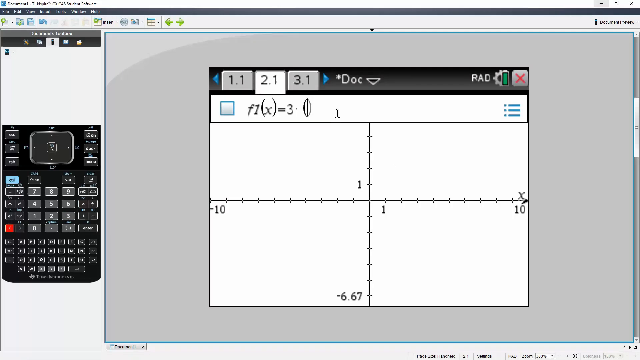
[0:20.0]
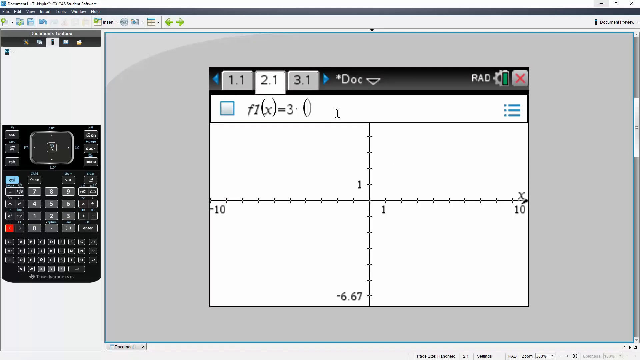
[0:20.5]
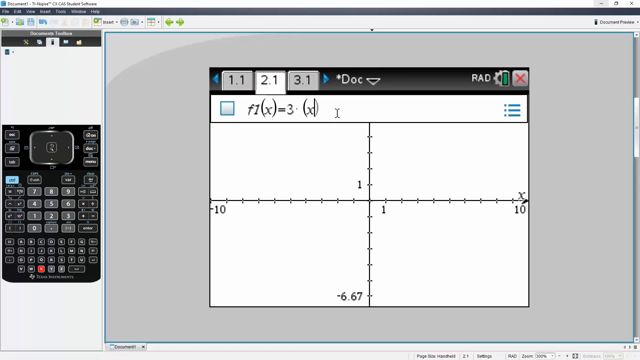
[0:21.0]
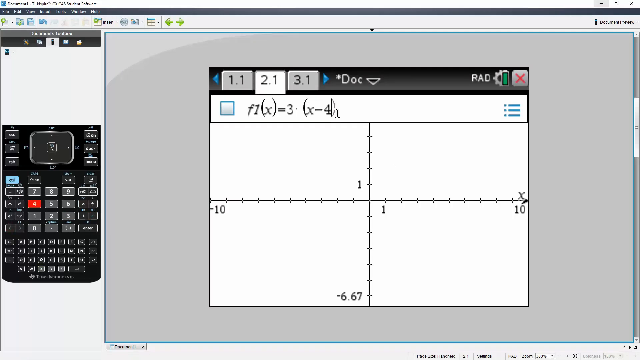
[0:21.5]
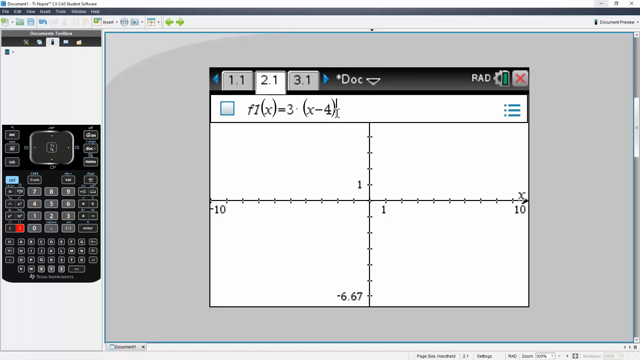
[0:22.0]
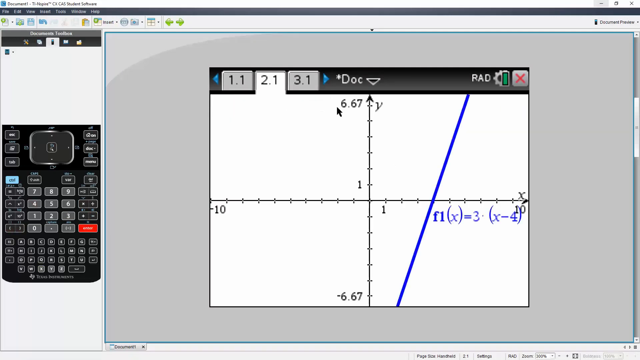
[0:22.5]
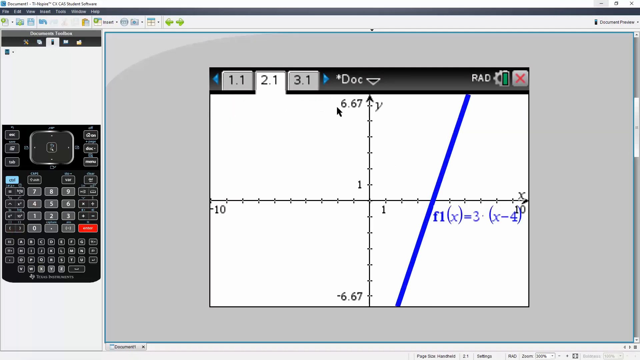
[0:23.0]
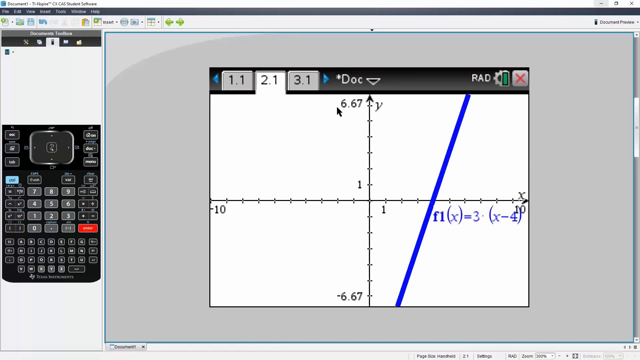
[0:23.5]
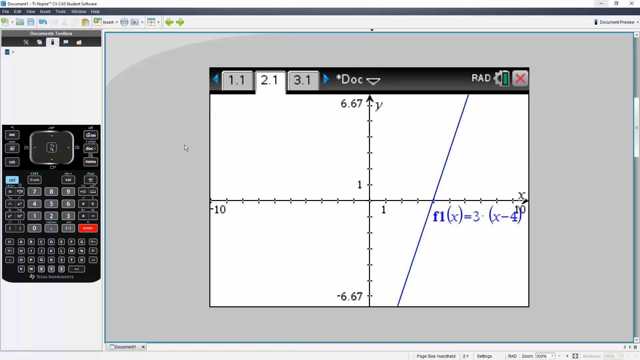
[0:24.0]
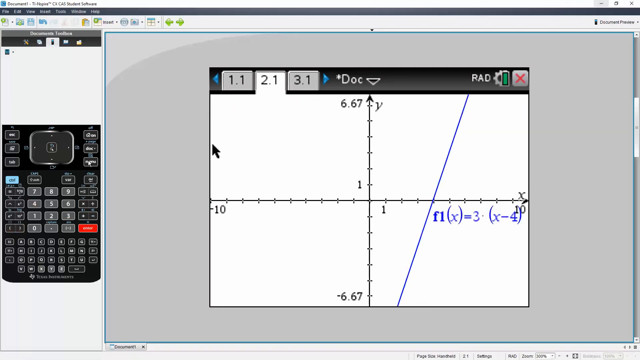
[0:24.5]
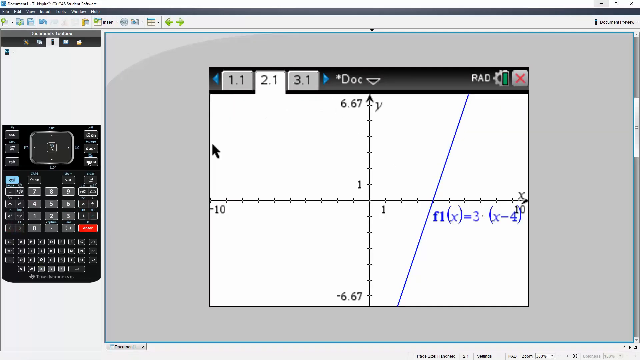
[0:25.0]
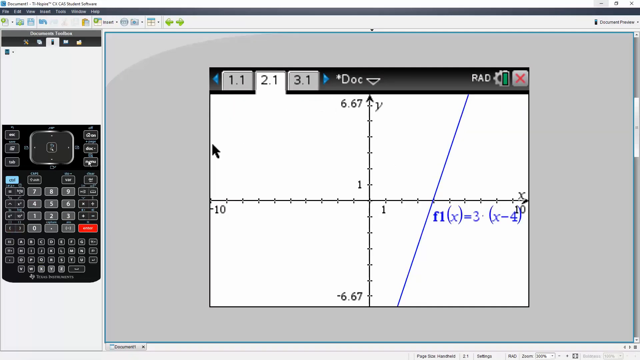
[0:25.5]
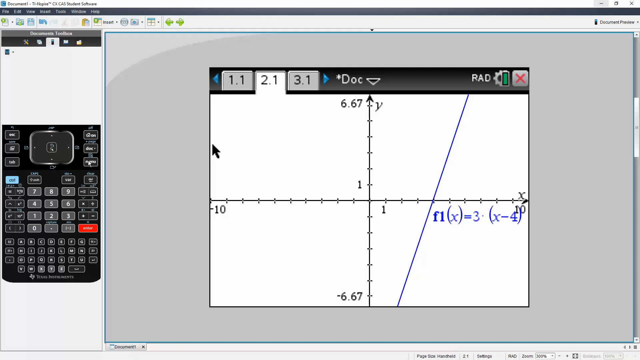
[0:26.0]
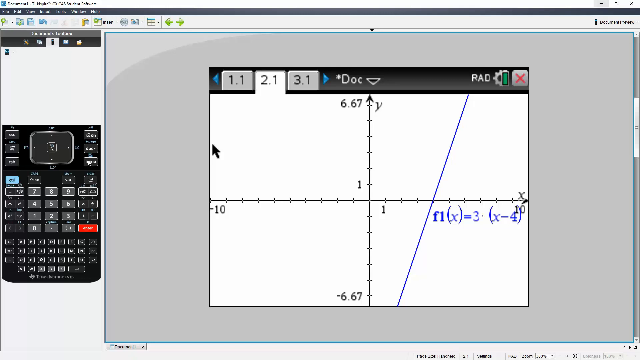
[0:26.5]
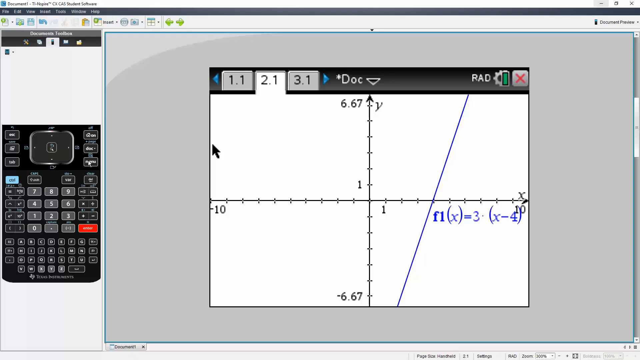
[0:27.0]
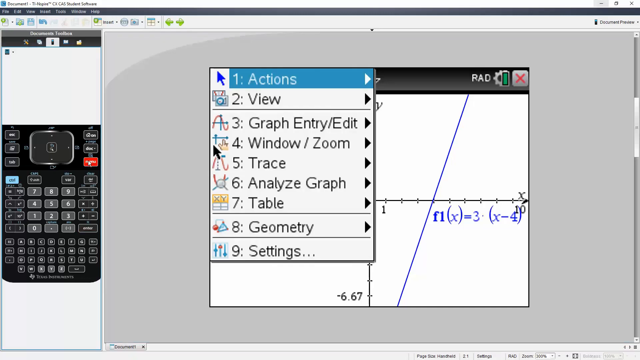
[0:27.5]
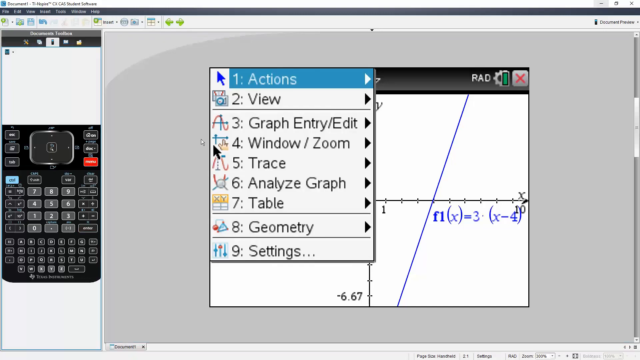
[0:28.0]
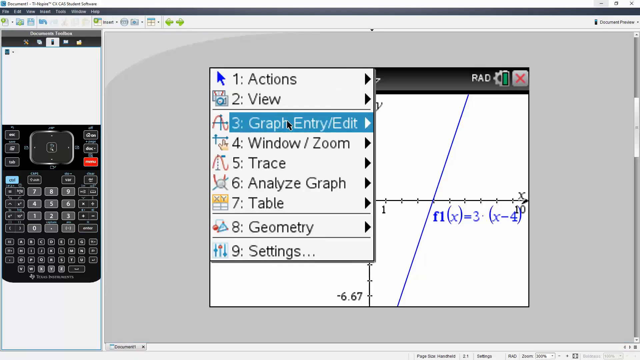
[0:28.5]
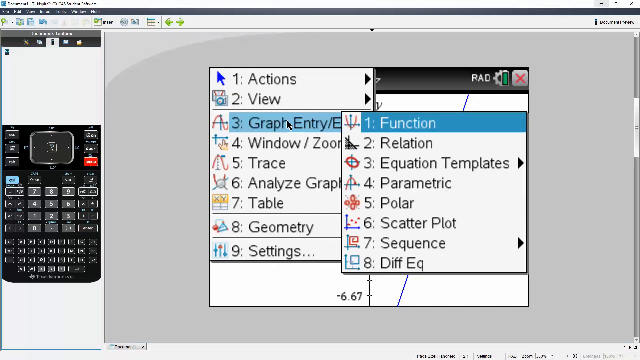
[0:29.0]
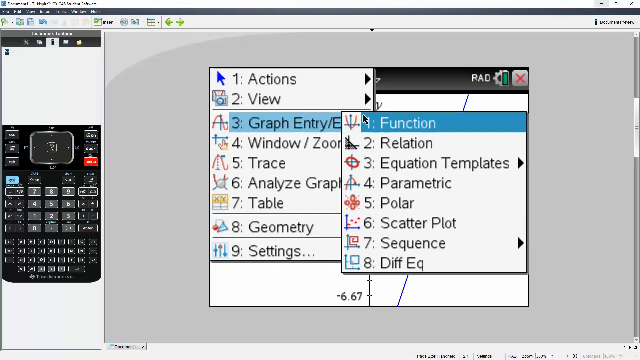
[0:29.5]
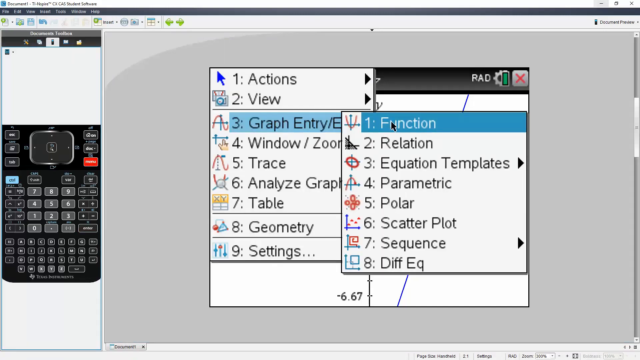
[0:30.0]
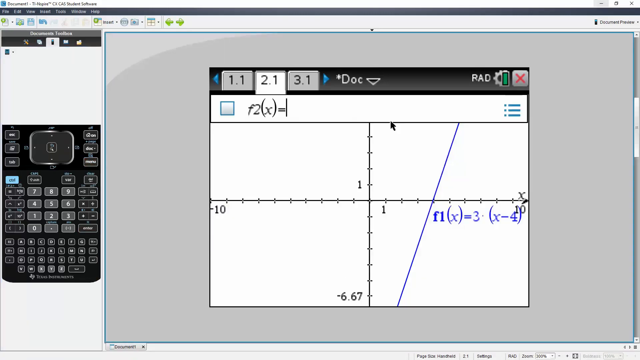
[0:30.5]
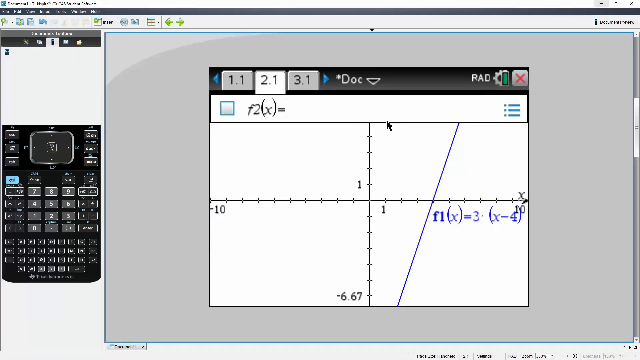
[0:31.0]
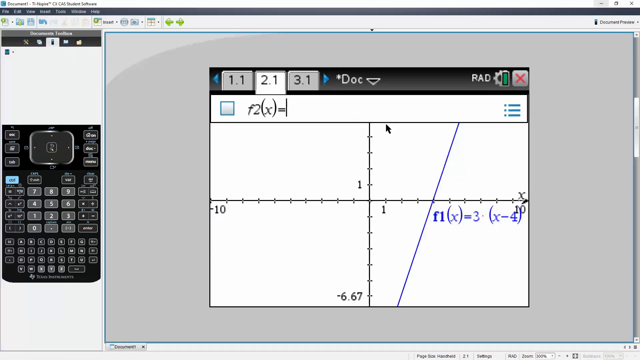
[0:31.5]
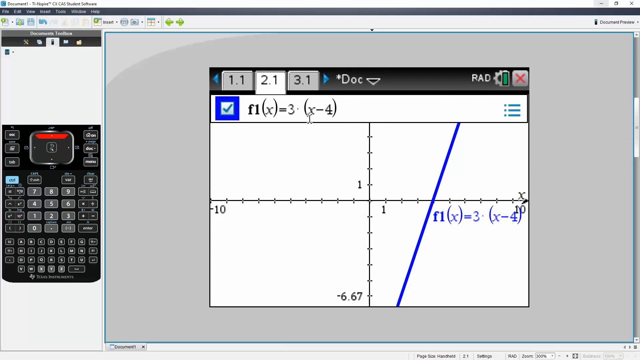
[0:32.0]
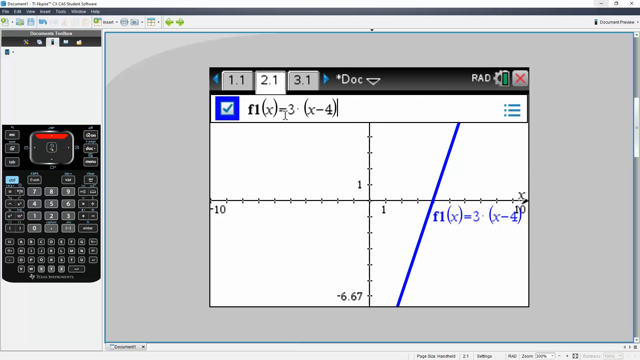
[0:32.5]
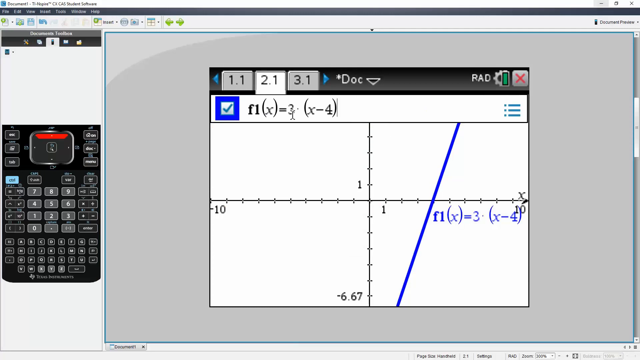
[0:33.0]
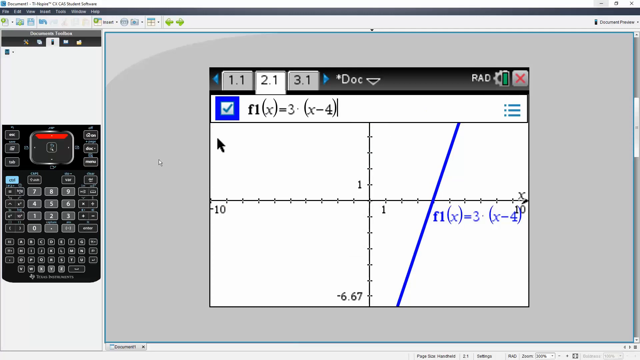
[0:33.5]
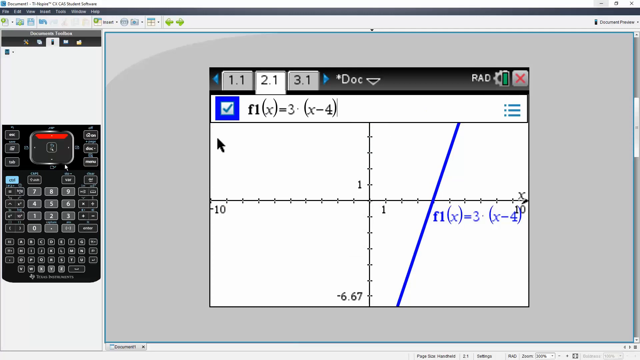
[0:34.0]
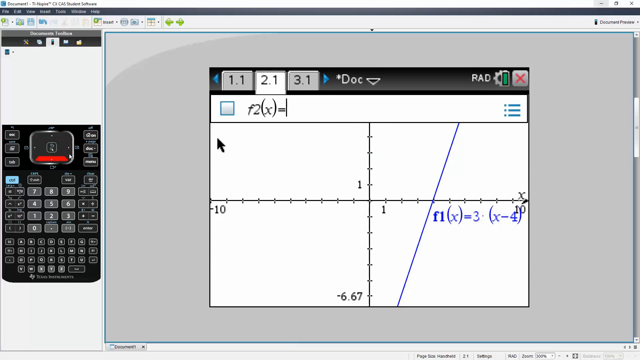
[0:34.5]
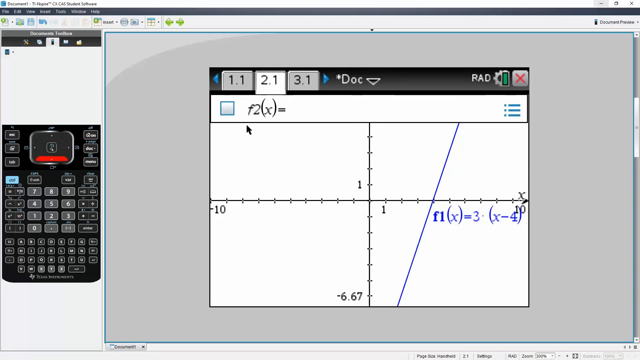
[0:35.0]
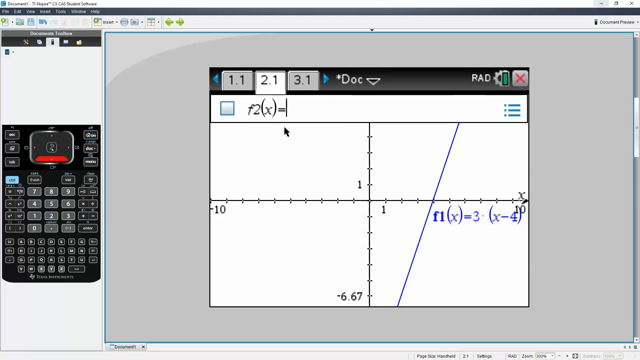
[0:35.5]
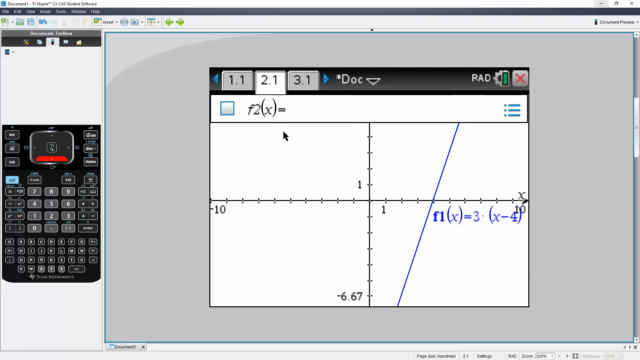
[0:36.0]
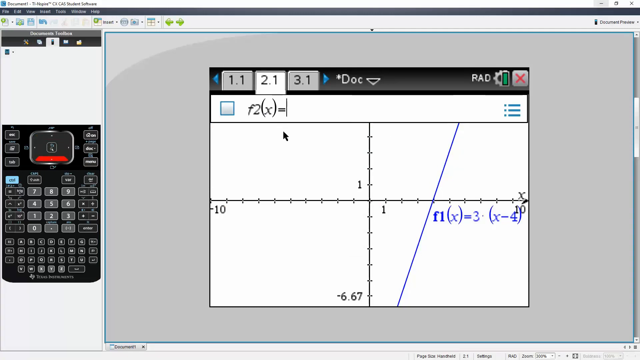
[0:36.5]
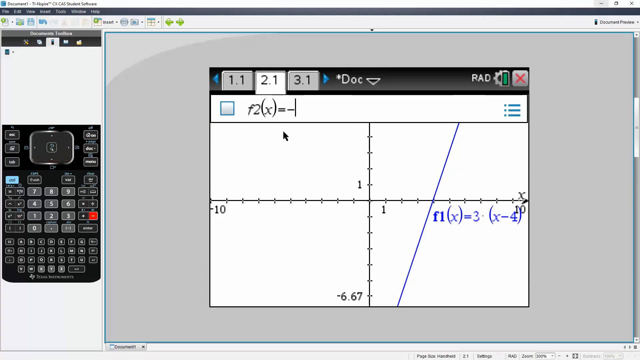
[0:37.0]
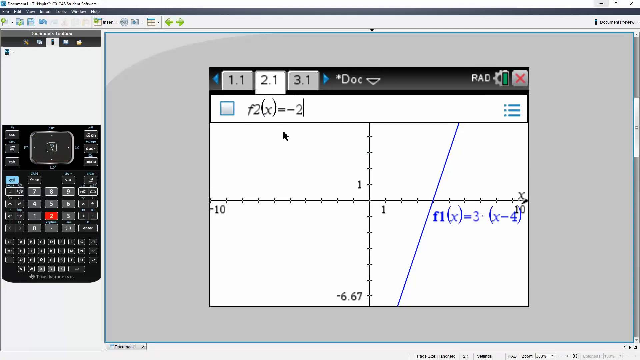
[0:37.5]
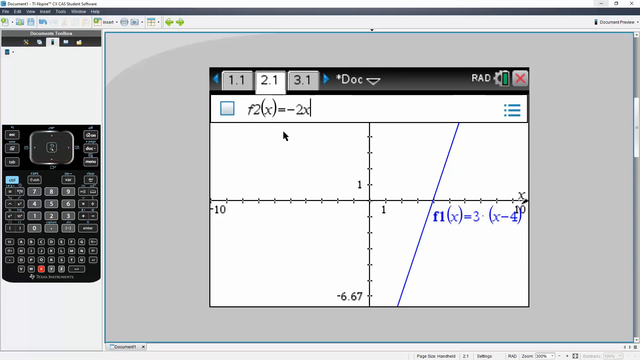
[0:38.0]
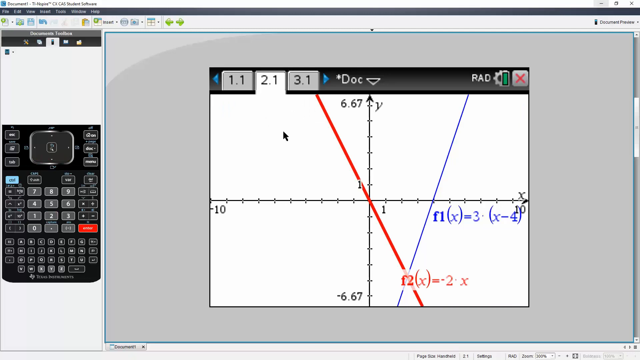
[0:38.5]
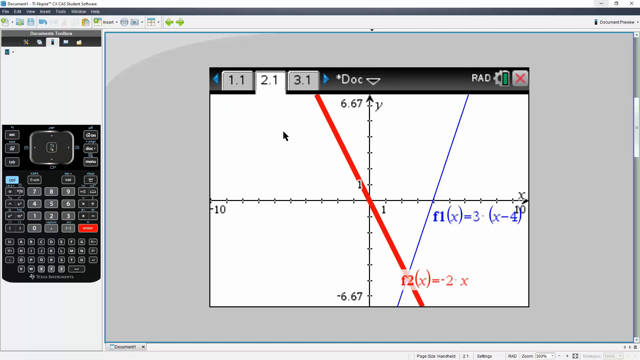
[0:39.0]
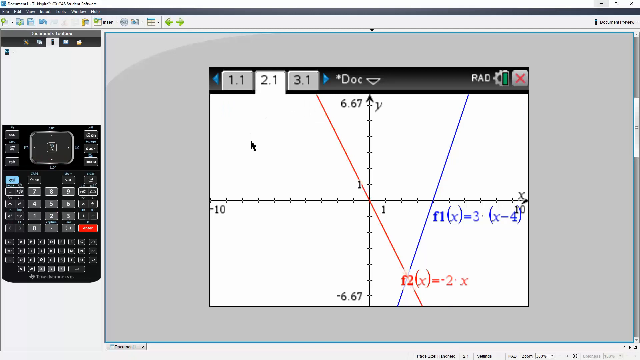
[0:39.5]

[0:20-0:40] Graph plotting continues. A calculator is visible, and a graph shows minus 10 and plus 10.